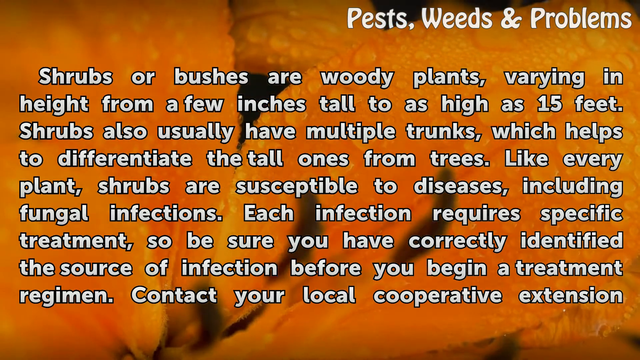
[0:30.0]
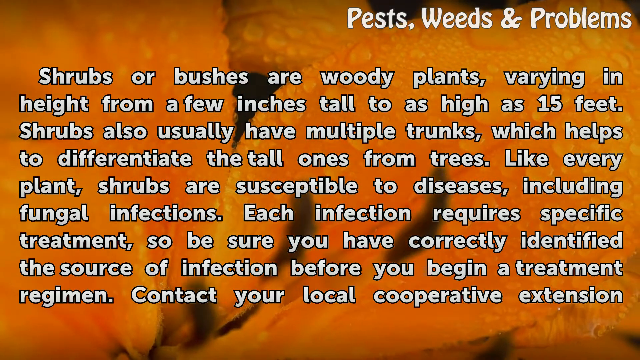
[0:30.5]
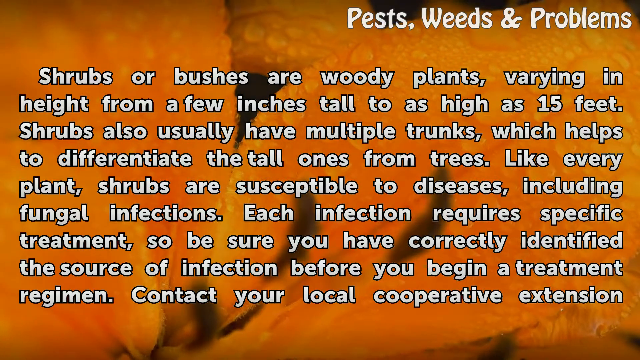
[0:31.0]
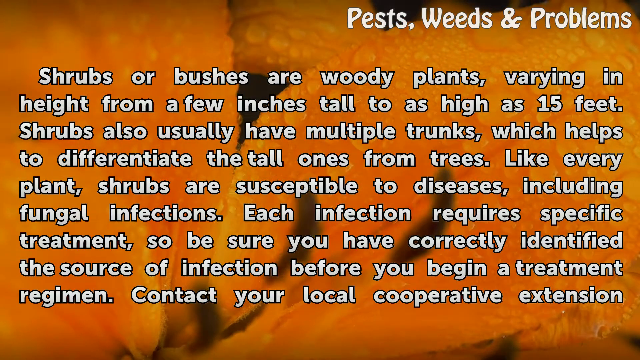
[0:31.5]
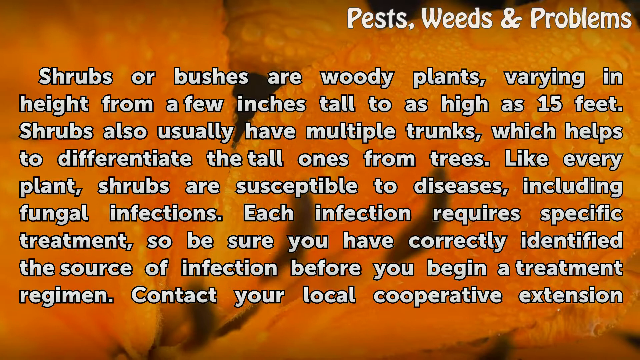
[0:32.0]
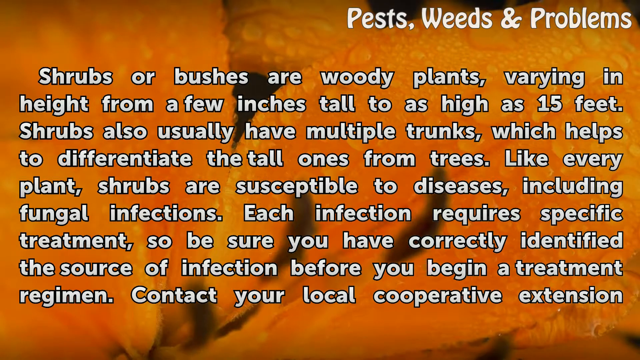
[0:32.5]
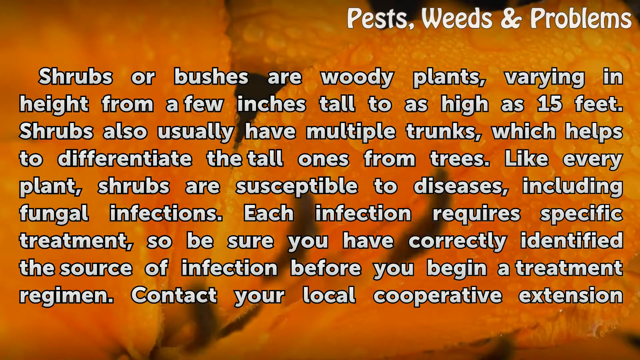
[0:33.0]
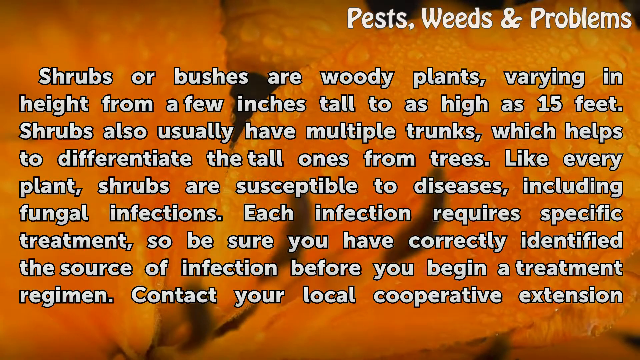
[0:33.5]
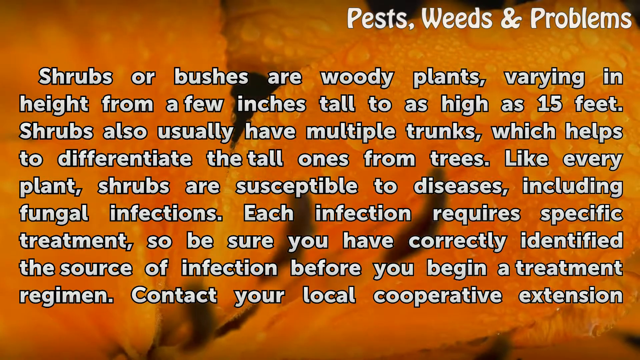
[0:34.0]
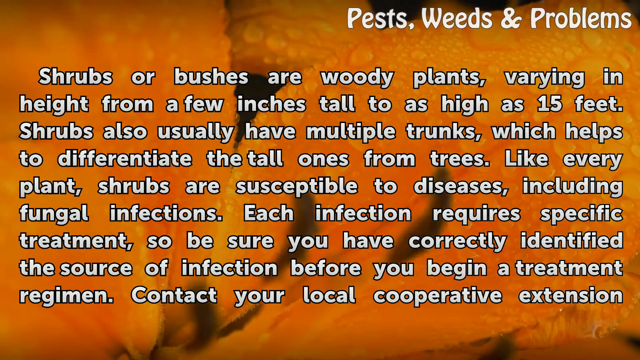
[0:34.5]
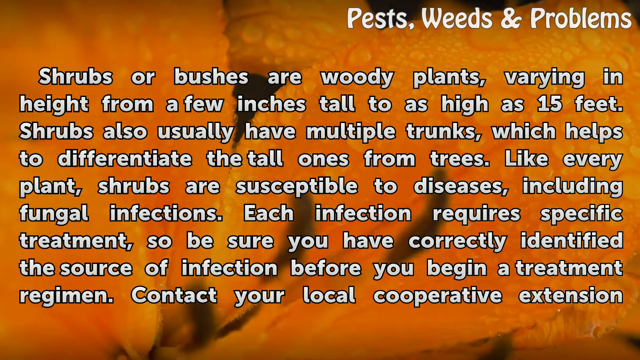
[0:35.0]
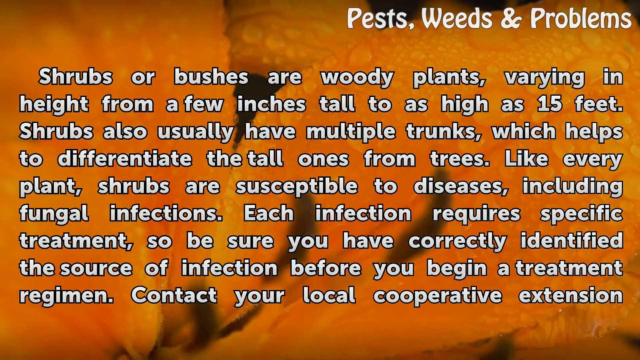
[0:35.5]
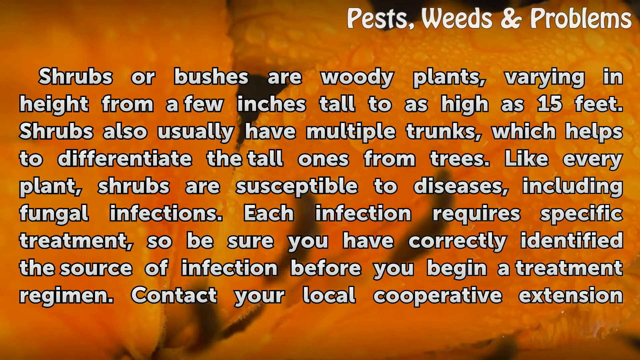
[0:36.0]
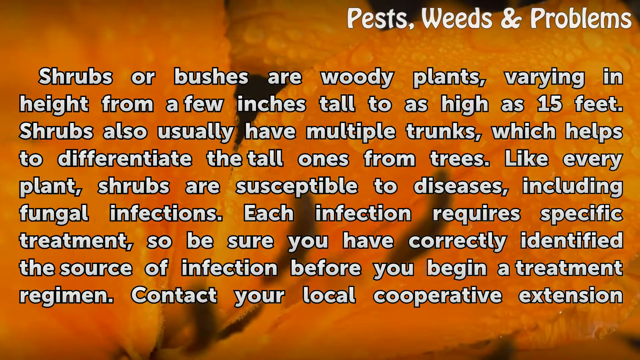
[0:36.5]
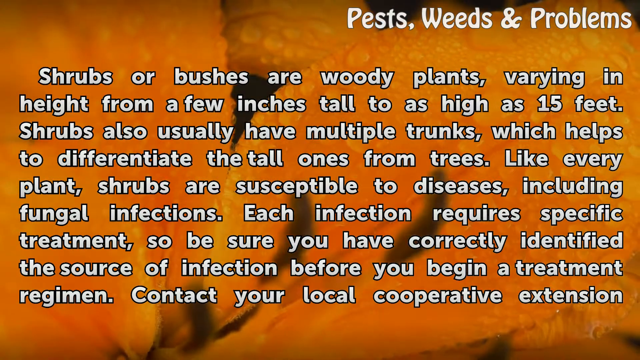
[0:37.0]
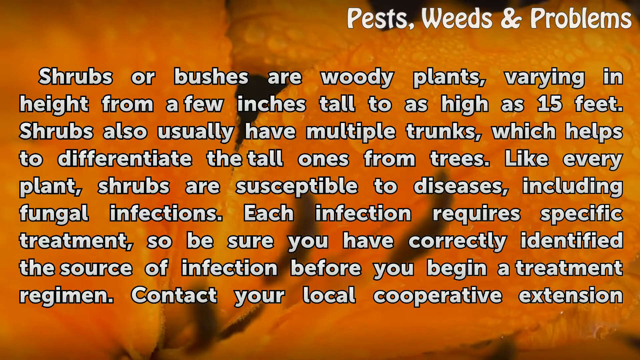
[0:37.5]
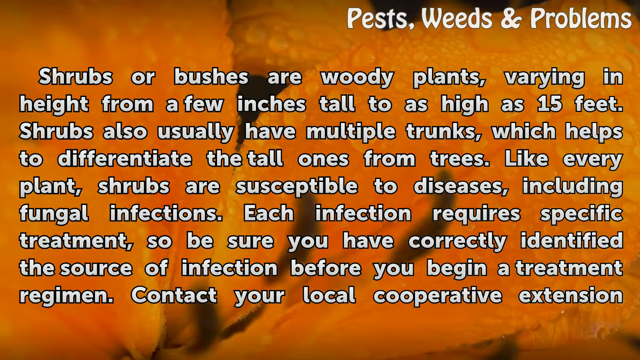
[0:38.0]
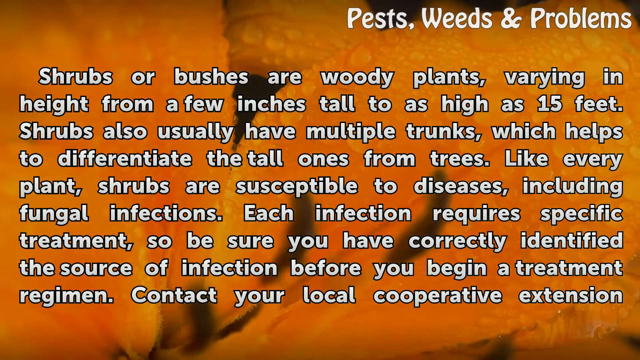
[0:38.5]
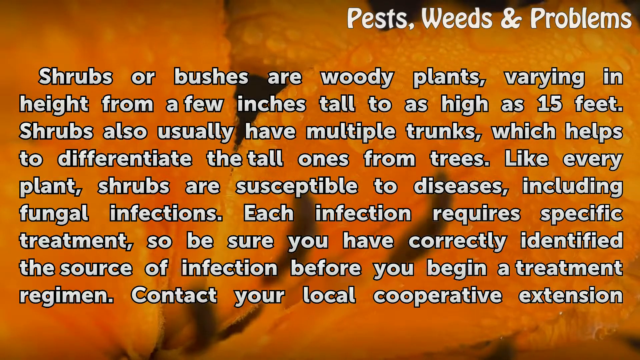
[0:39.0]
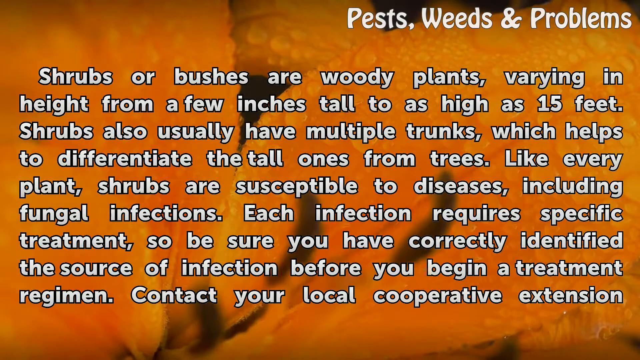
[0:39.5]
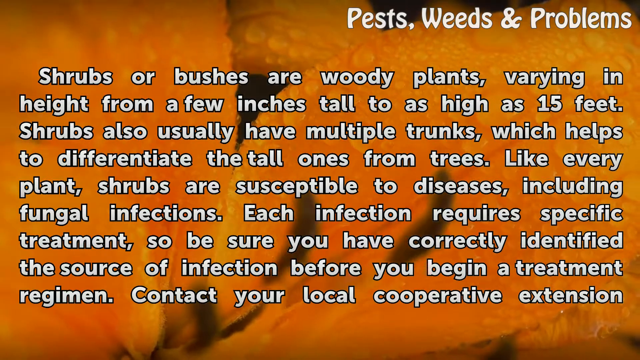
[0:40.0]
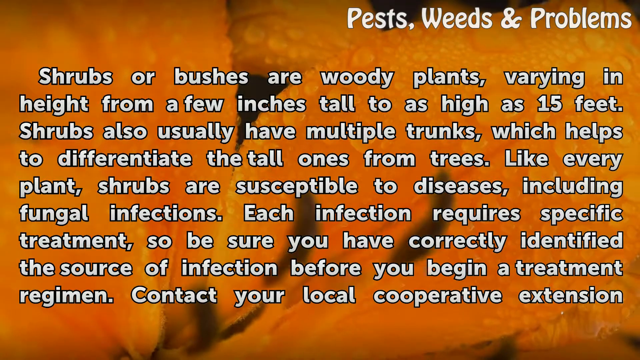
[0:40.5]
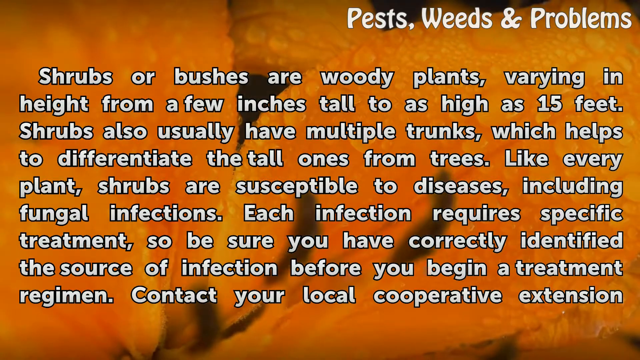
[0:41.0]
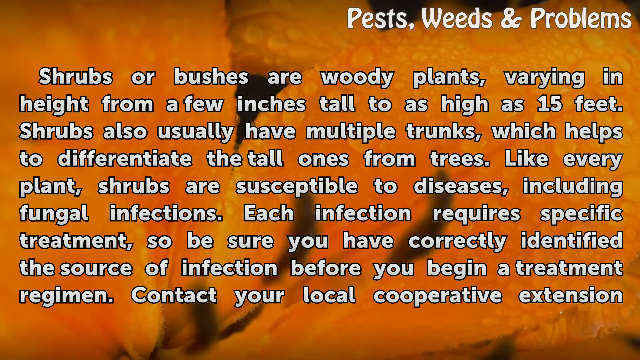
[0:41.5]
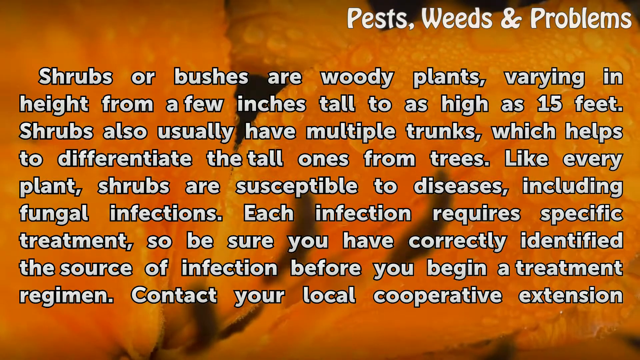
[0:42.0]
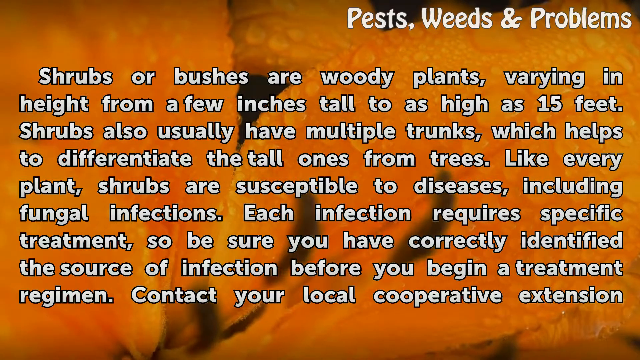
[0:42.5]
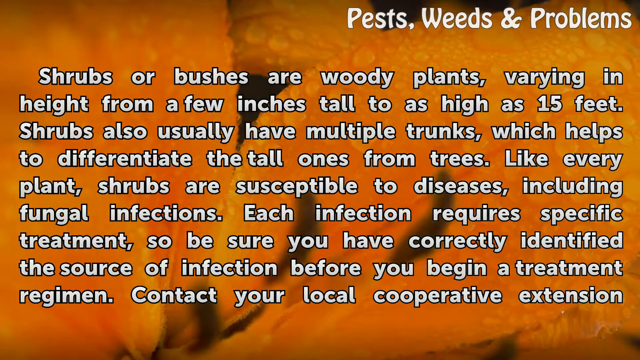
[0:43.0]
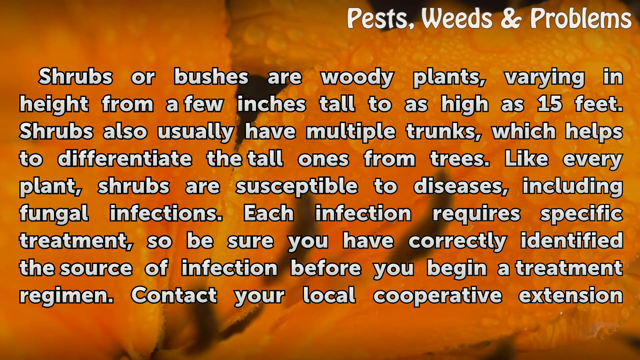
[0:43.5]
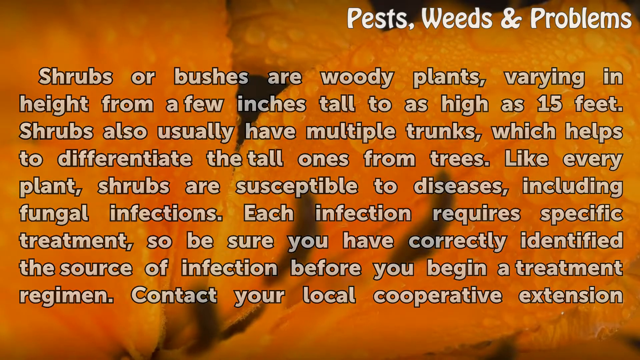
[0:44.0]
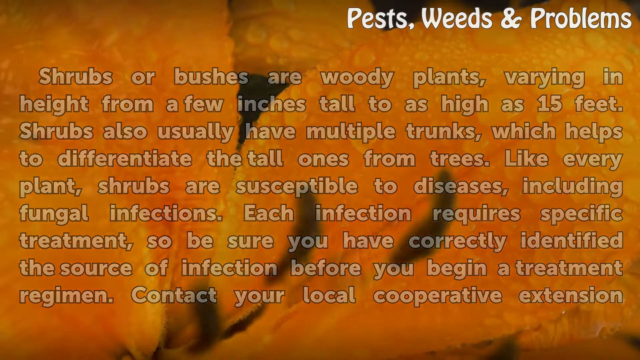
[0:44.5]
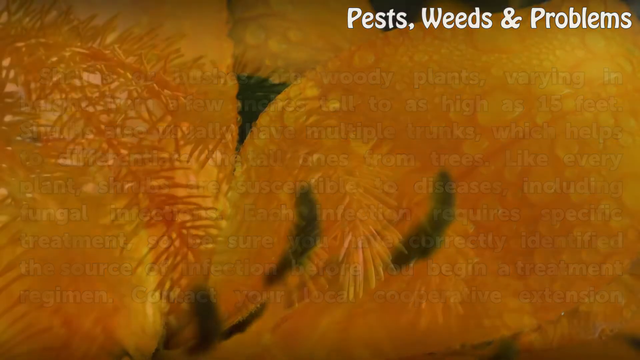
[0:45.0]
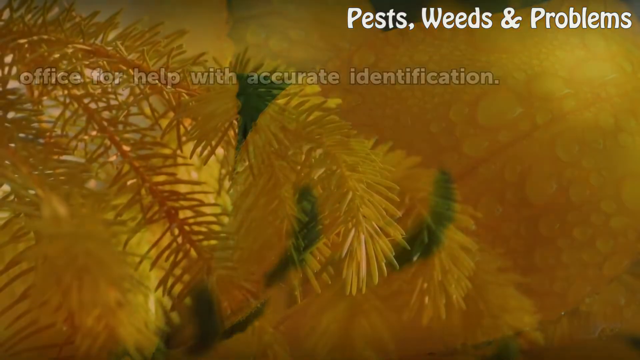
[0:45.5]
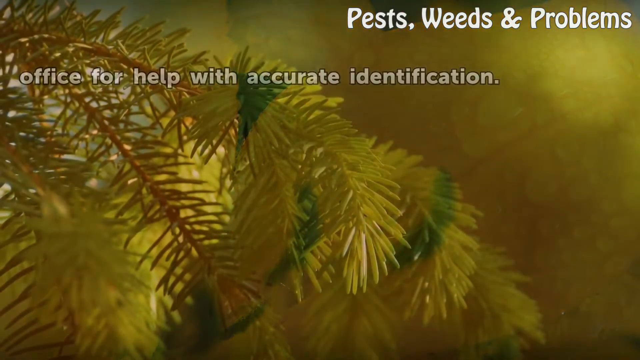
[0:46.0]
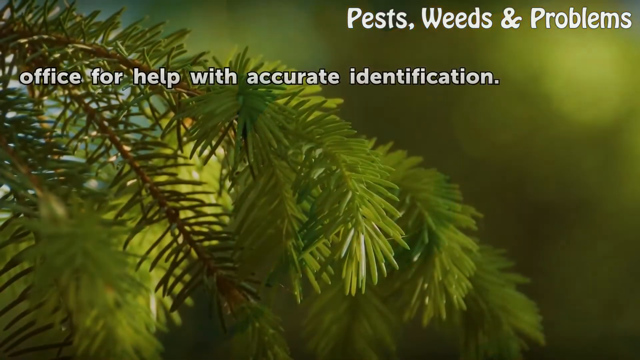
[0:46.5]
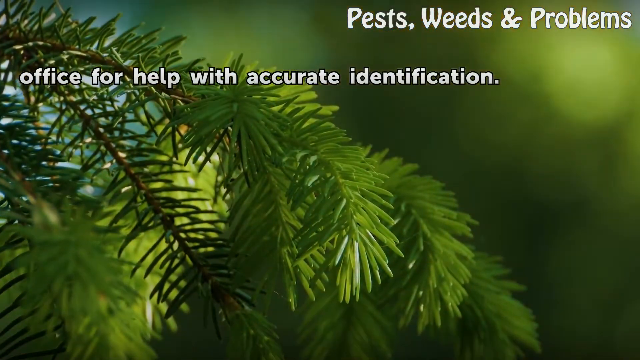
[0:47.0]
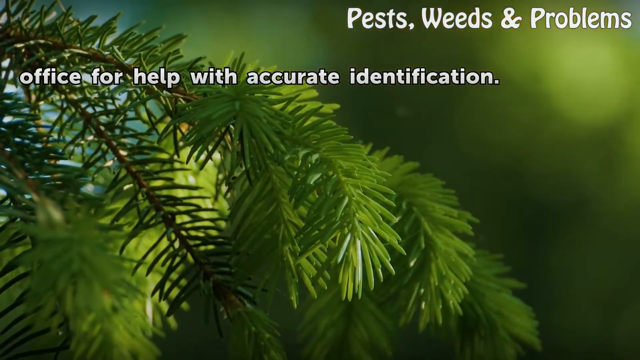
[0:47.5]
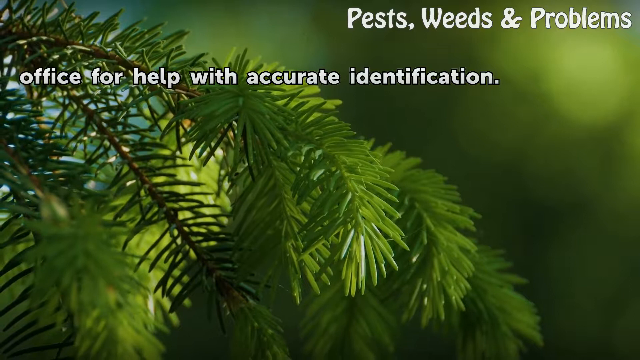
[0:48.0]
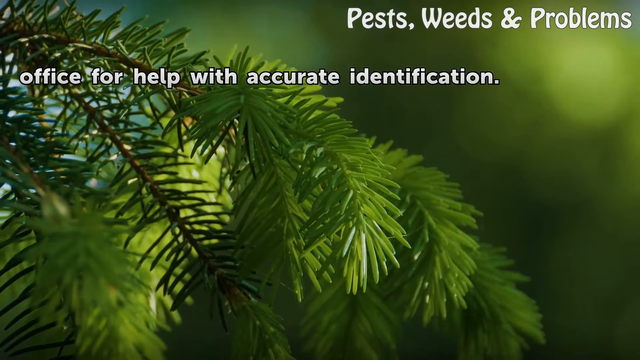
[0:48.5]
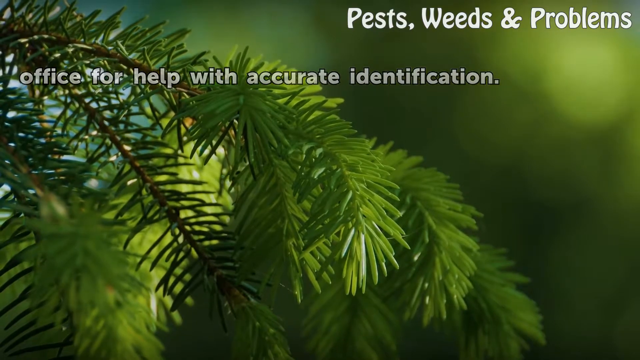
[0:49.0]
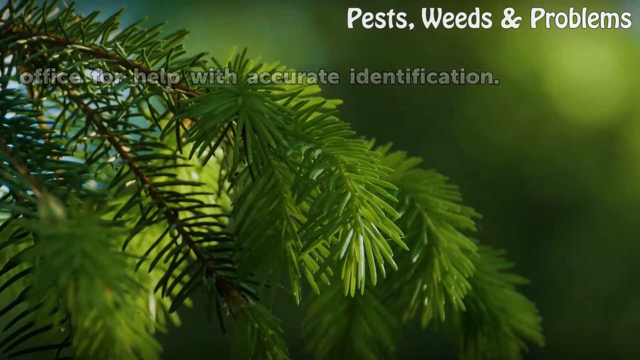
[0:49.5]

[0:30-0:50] Nine lines of white text read: "shrubs or bushes are woody plants, varying in height from a few inches tall to as high as 15 feet. Shrubs also usually have multiple trunks, which helps to differentiate tall ones from trees. Like every plant, shrubs are susceptible to diseases, including fungal infections. Each infection requires specific treatment, so be sure you have correctly identified the source of infection before you begin a treatment regimen. Contact your local cooperative extension." The background is a close-up image of a bright orange plant, and a single line of white text in the top right corner reads "Pests, Weeds & Problems". After a few seconds the words fade out and the background switches to a close-up of pine branches. A single line of white text appears toward the top of the screen, reading "office for help with accurate identification."